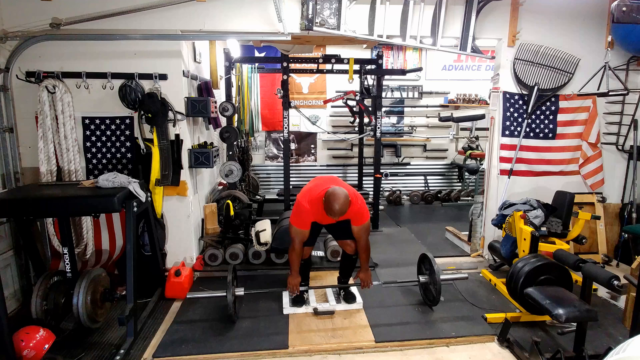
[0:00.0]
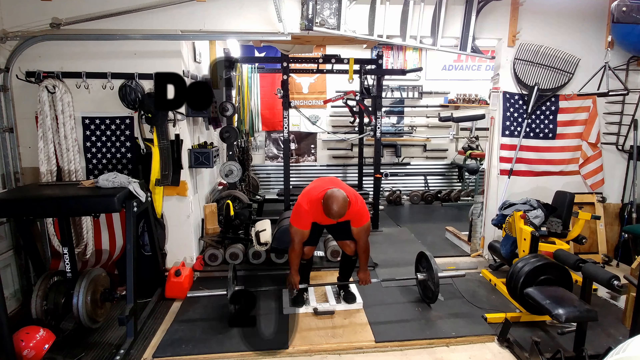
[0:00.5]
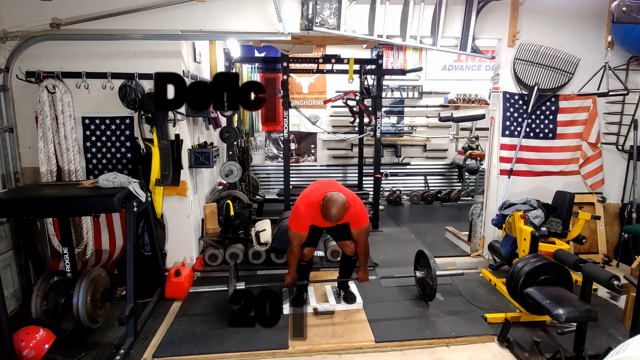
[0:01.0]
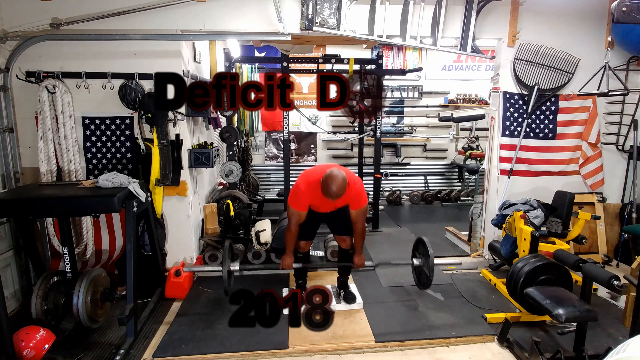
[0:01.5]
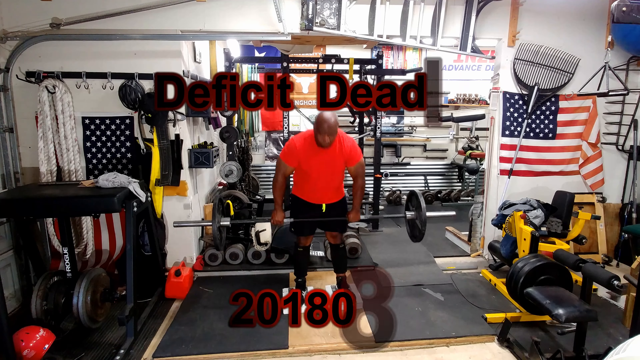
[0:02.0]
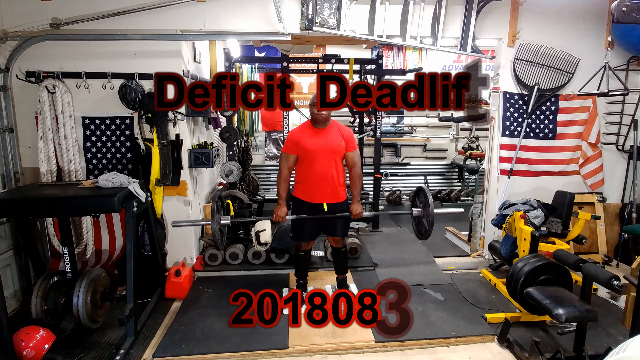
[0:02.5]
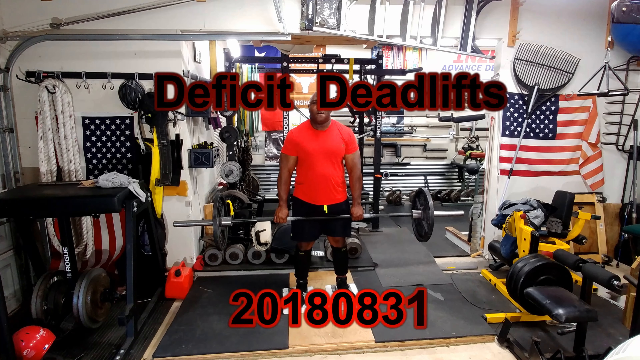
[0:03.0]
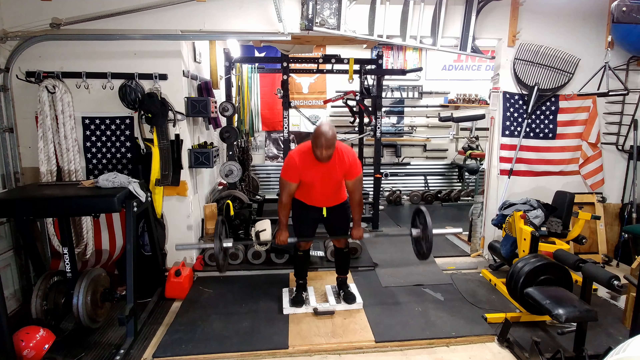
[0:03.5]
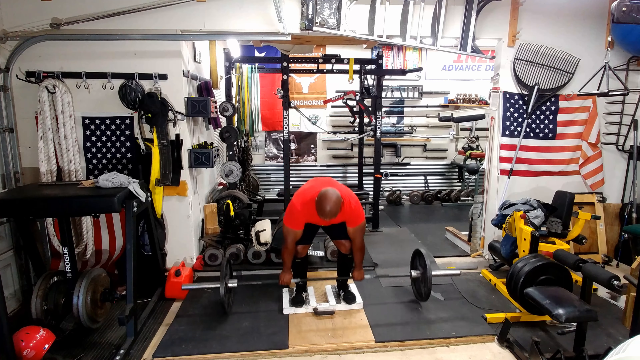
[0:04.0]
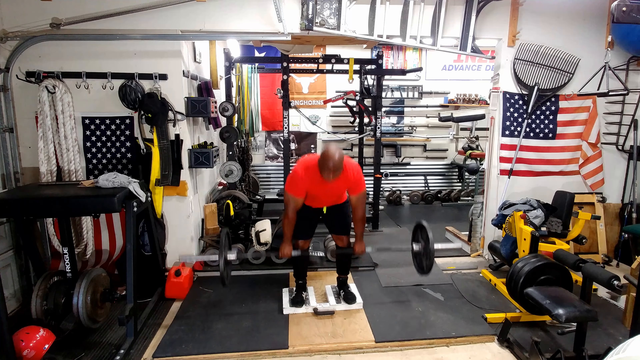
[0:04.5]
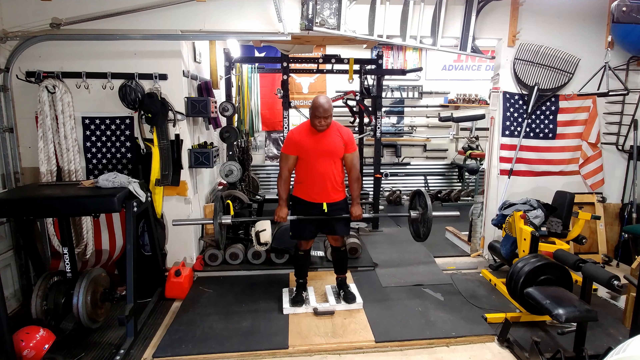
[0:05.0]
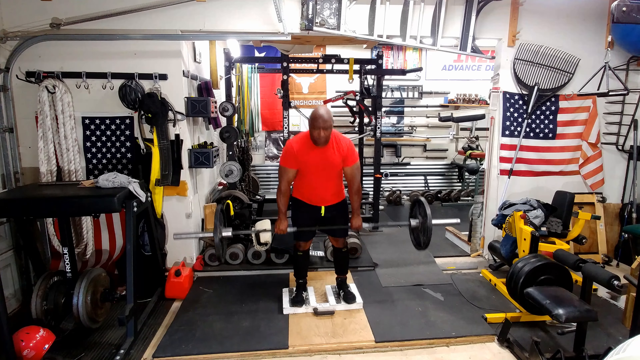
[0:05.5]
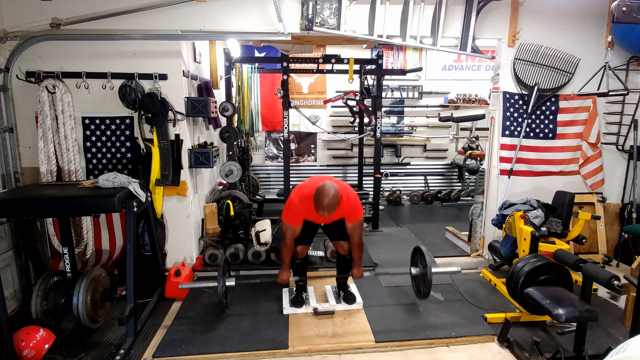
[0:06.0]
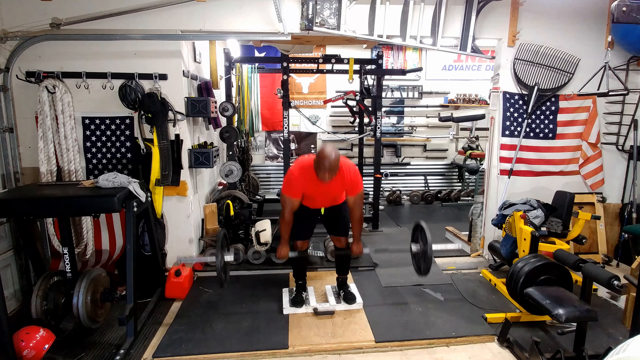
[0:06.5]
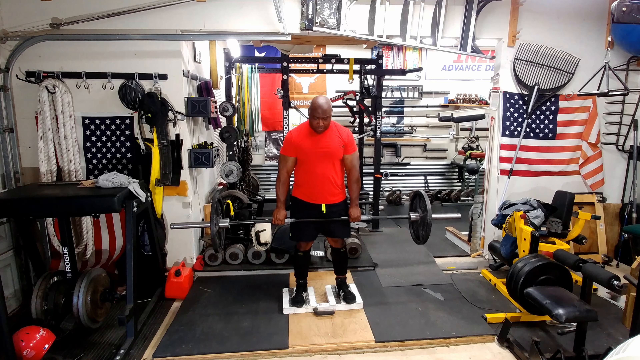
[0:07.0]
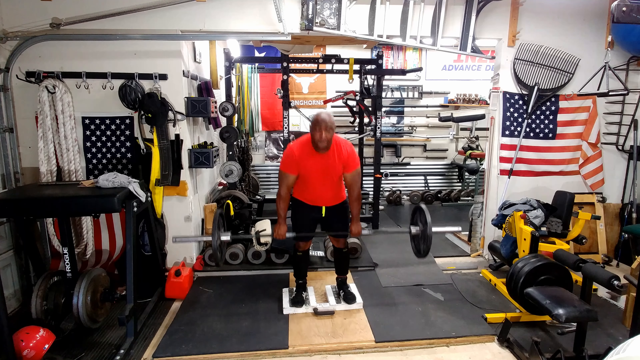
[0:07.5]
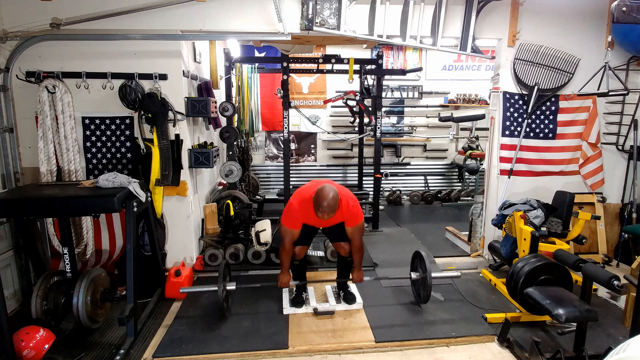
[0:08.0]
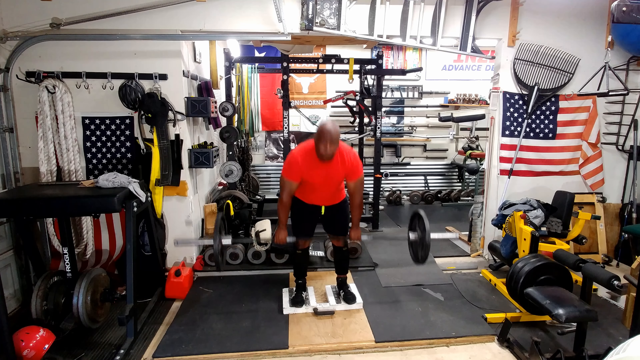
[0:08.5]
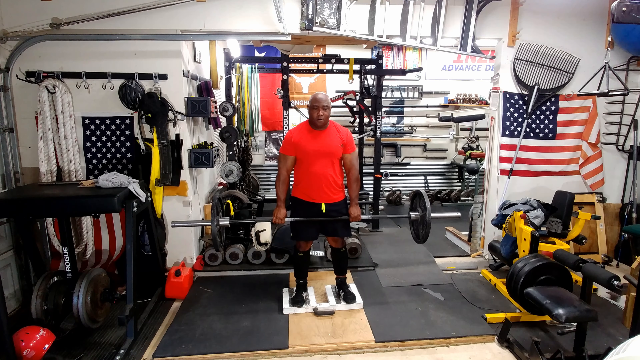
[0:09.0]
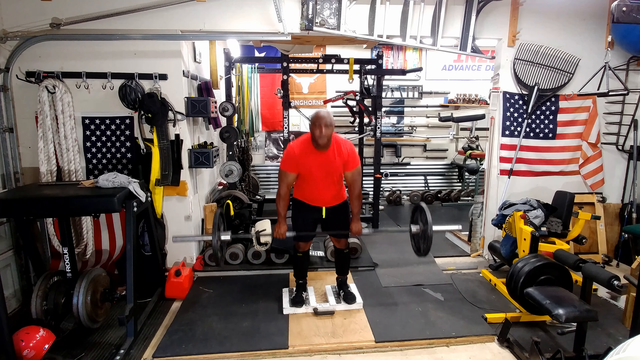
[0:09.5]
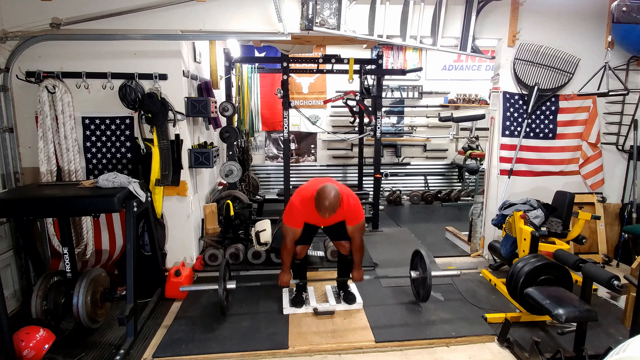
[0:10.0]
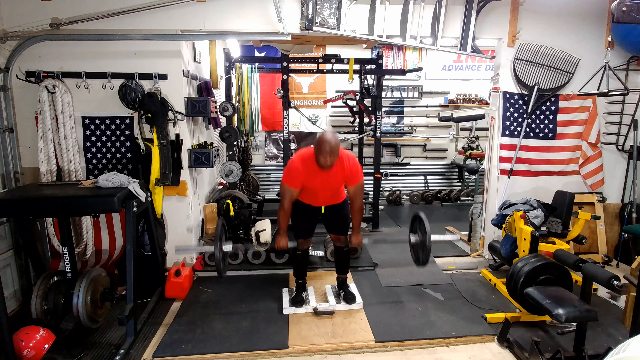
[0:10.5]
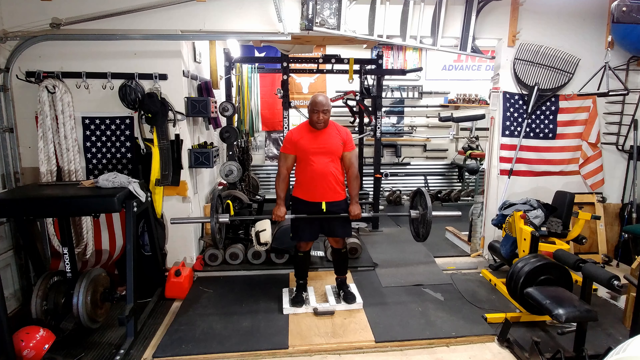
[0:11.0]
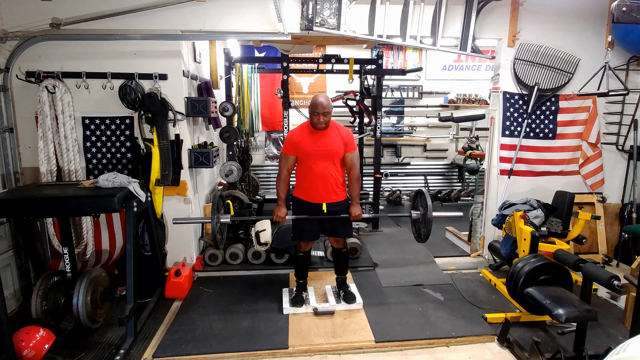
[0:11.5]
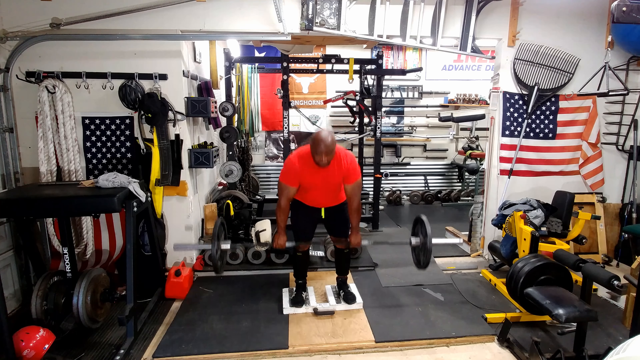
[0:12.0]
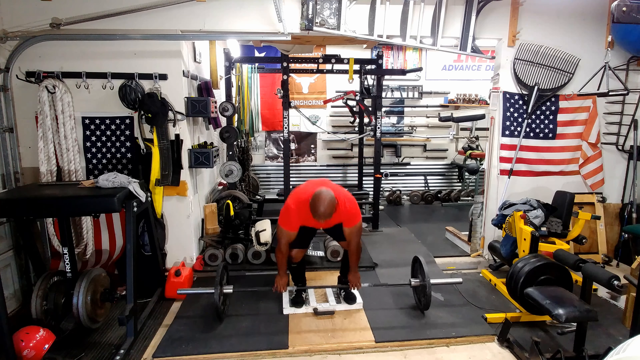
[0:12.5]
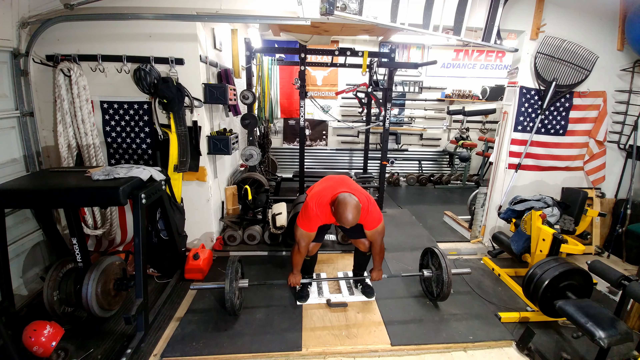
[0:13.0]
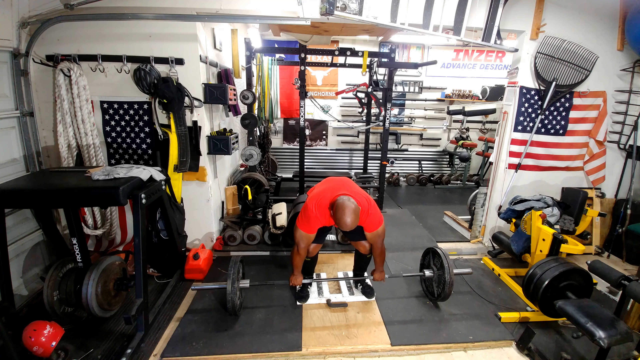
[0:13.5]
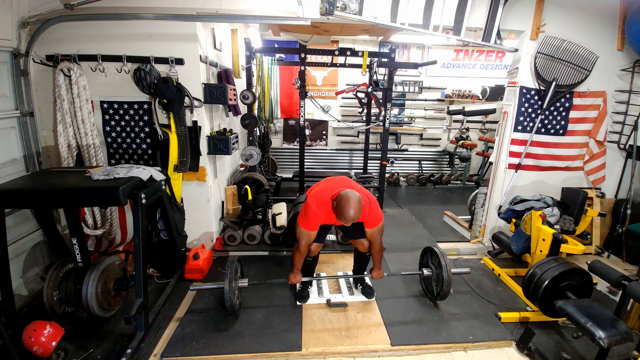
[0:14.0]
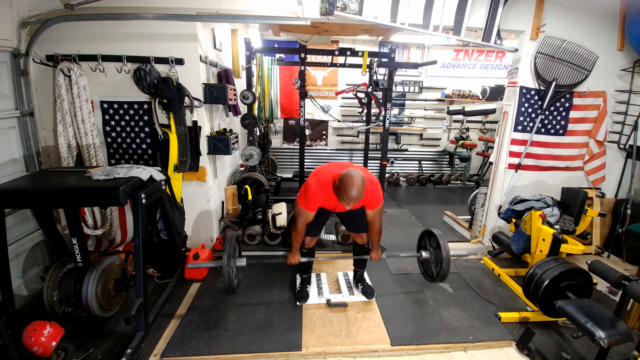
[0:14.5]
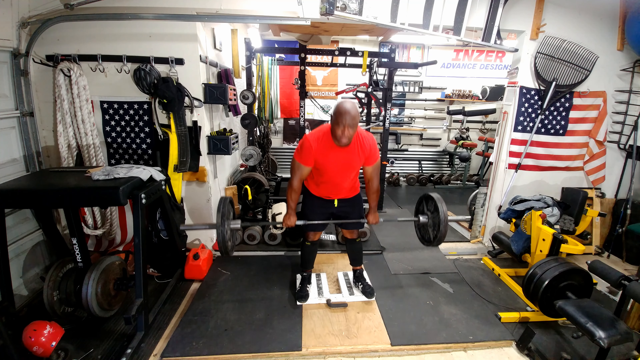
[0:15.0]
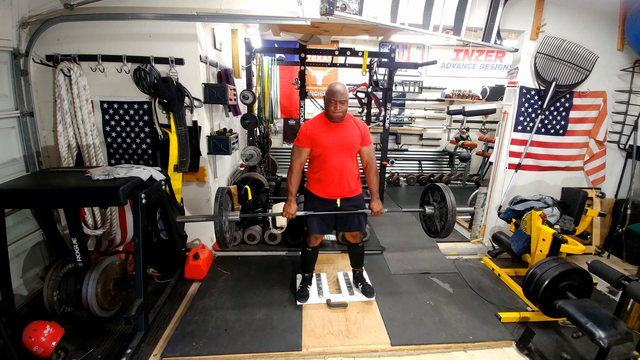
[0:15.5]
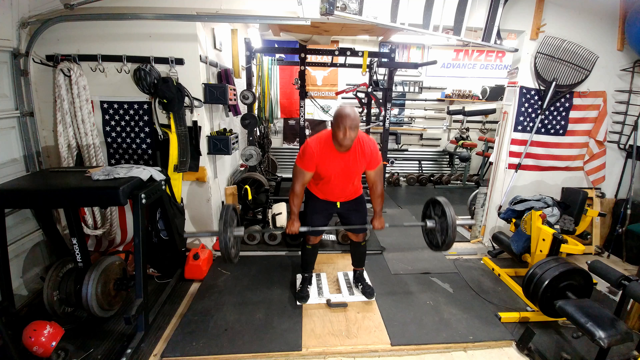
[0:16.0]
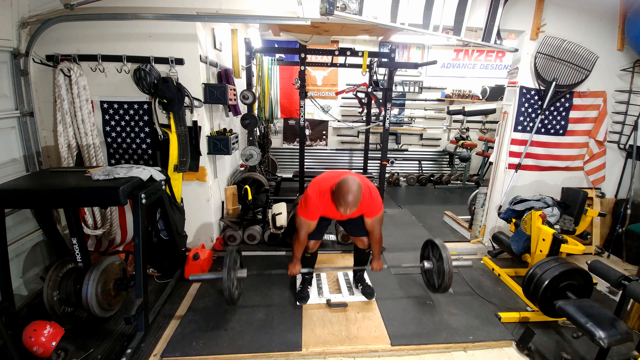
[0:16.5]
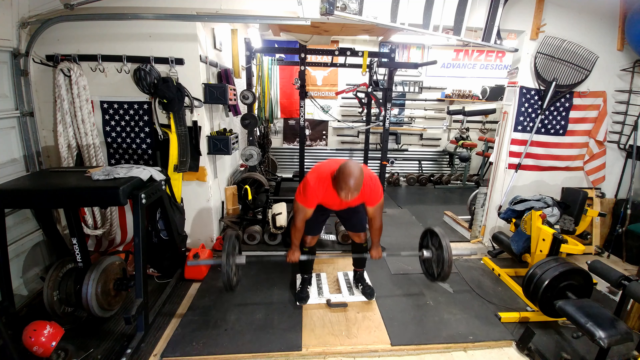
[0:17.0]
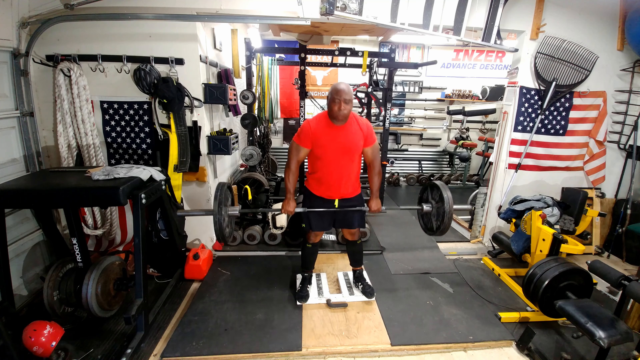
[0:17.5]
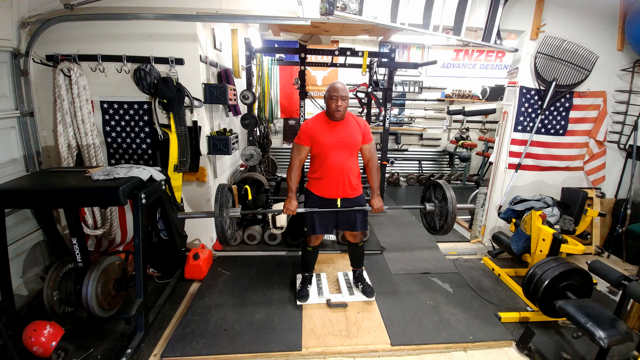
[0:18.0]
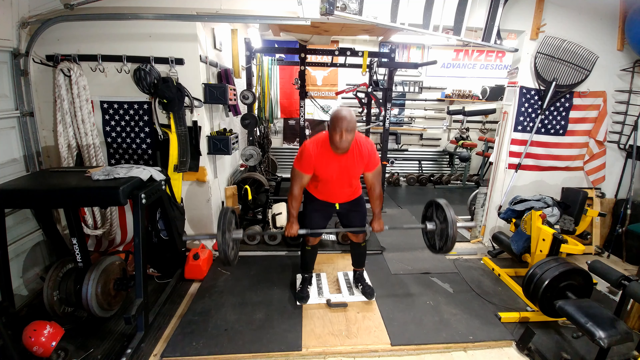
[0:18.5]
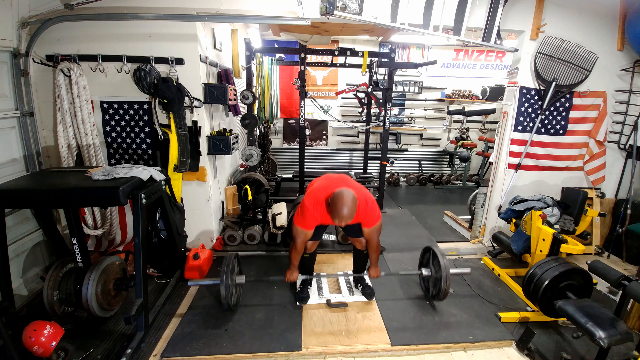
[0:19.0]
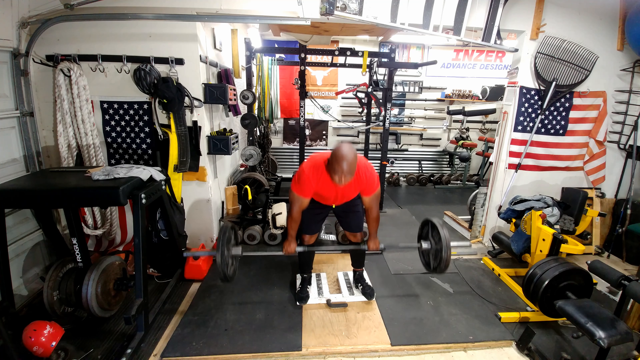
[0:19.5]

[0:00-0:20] The video appears to be set in a gym. The space is very cluttered, with white walls. There is a main room and an entrance to a back room that has a bunch of shelves and weights, though not much of the background there is visible. The room is decorated with a few pictures, including a Texas flag next to a Texas Longhorn poster, and there is an American flag on either side of the wall before the entrance. At the center of the frame is a man in a red shirt and black shorts. As the video starts, a title comes to the center of the screen reading "Deficit Deadlift", and at the bottom center of the screen are the numbers "20180831". The man begins doing deadlifts, lifting weights with both hands while his back bends over to lift them. He does this a few times, then partway through he drops the weight for just a second before picking it up and lifting again.